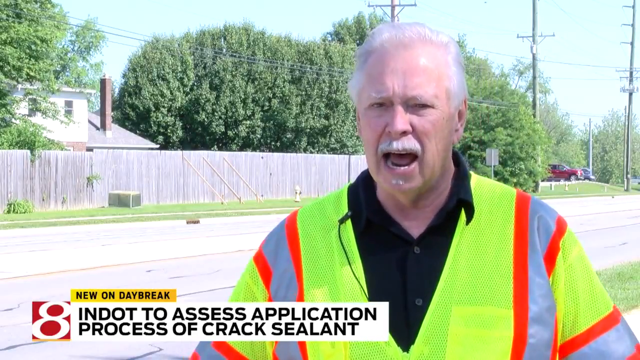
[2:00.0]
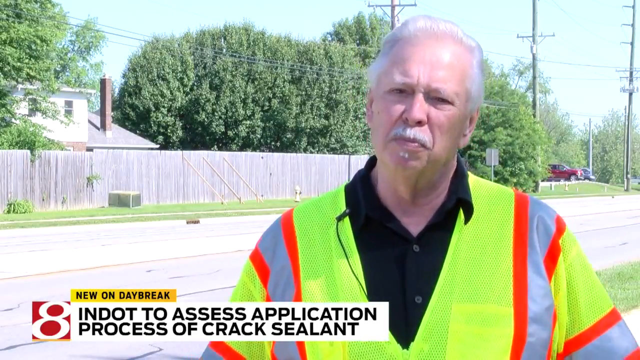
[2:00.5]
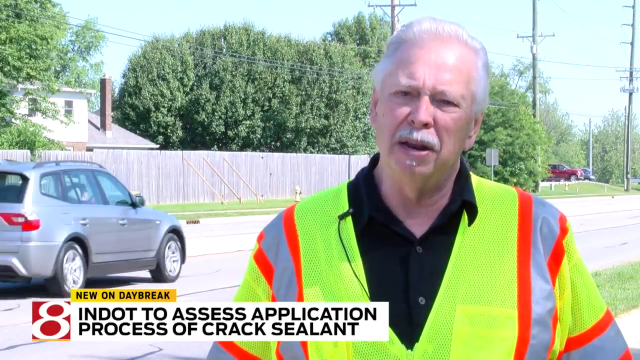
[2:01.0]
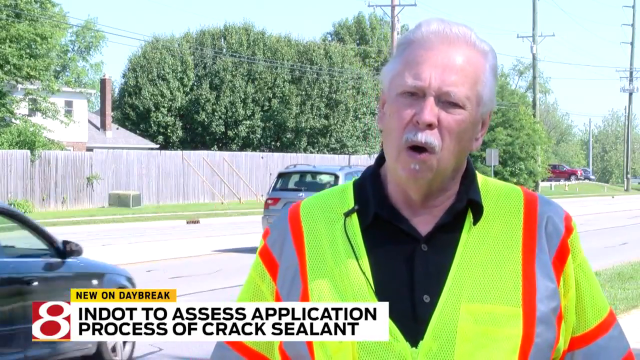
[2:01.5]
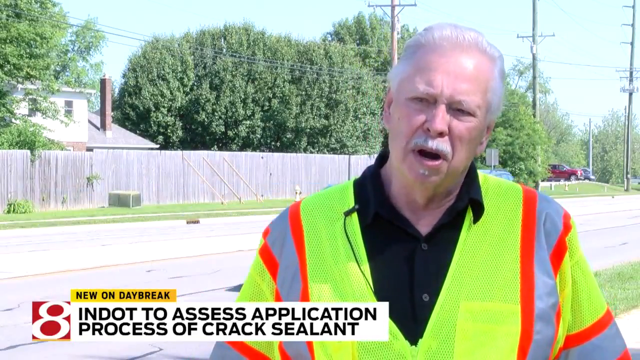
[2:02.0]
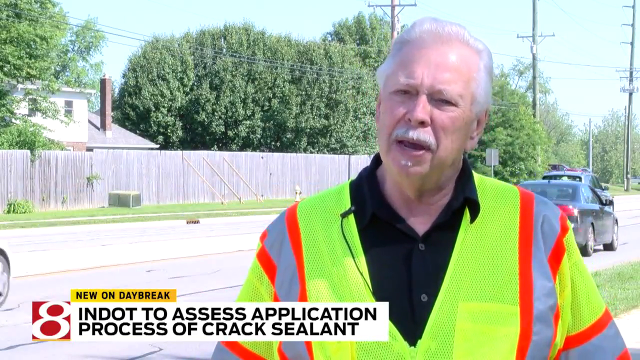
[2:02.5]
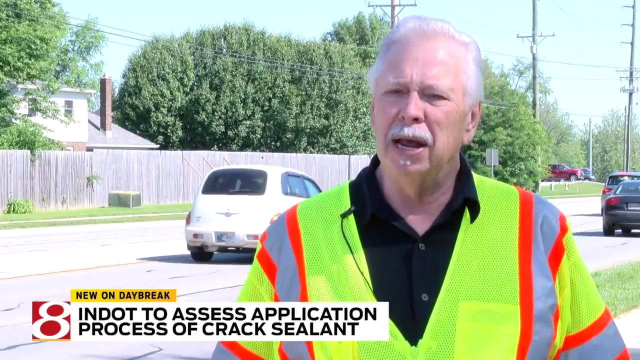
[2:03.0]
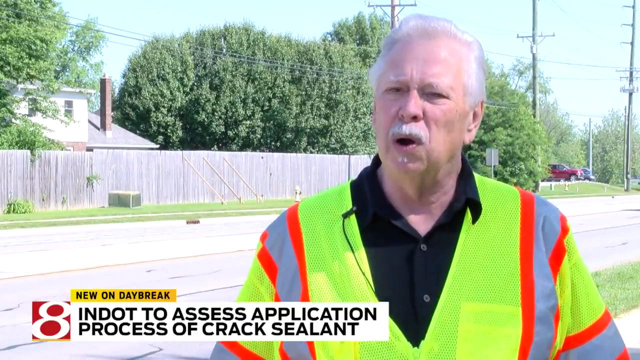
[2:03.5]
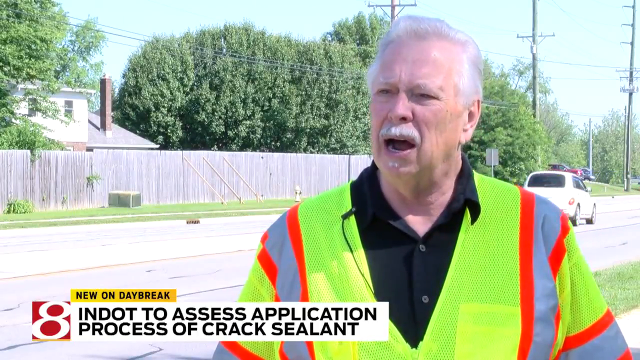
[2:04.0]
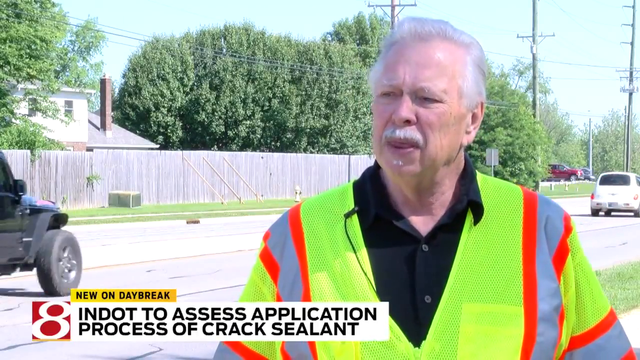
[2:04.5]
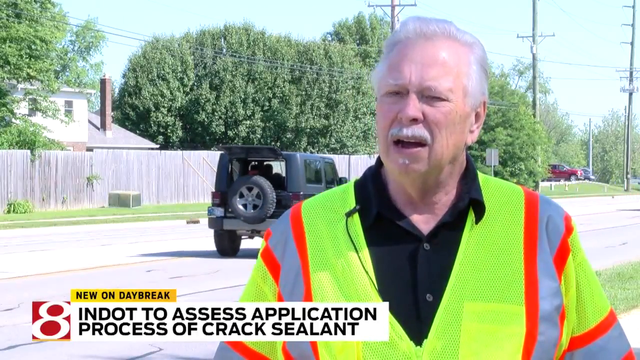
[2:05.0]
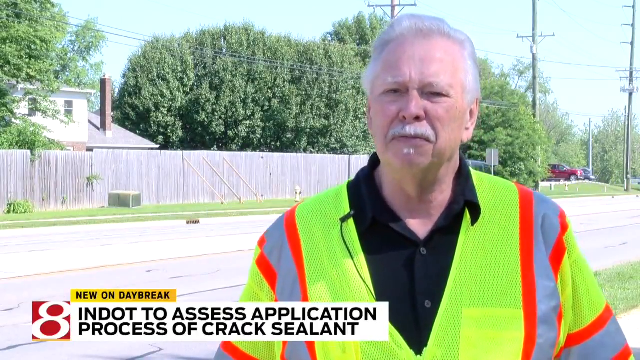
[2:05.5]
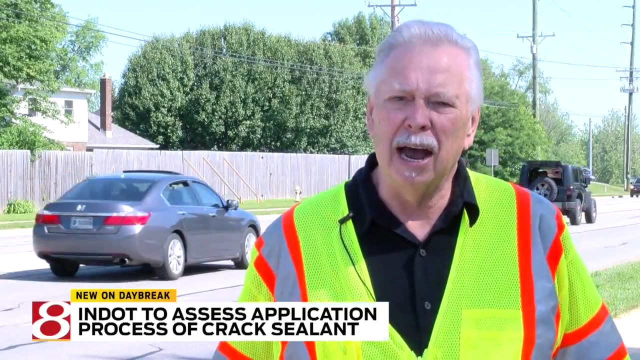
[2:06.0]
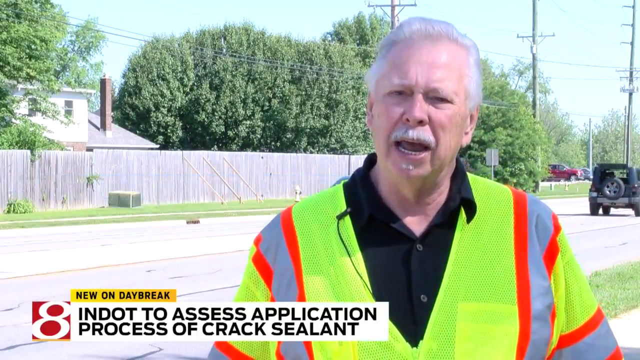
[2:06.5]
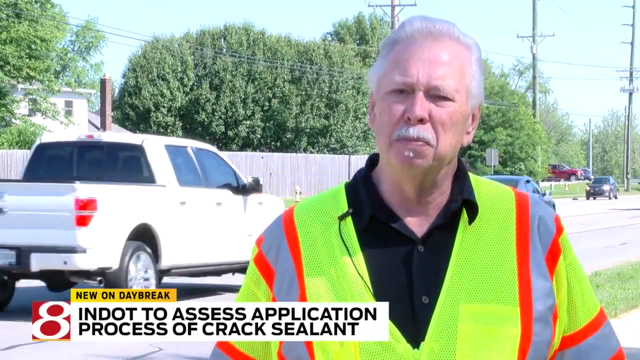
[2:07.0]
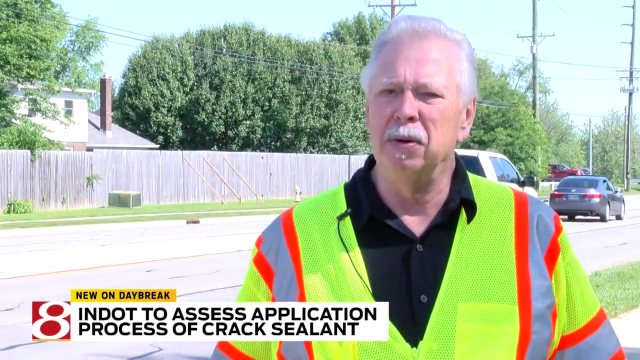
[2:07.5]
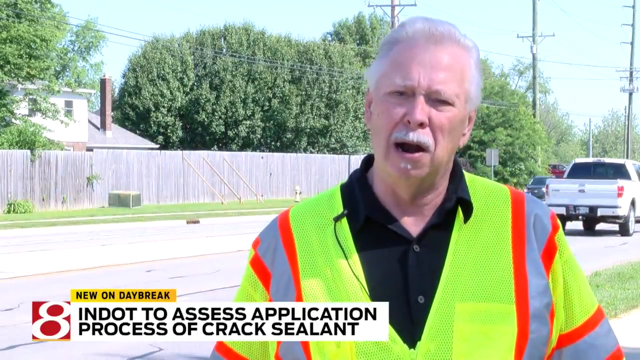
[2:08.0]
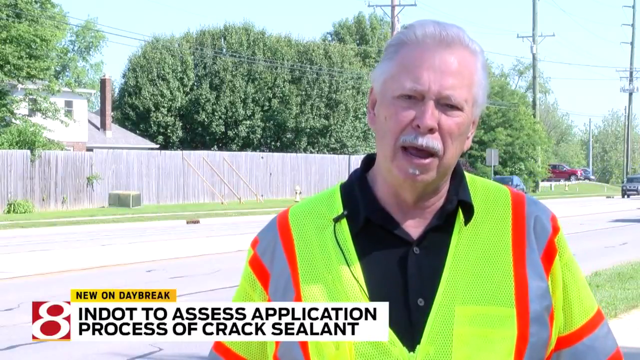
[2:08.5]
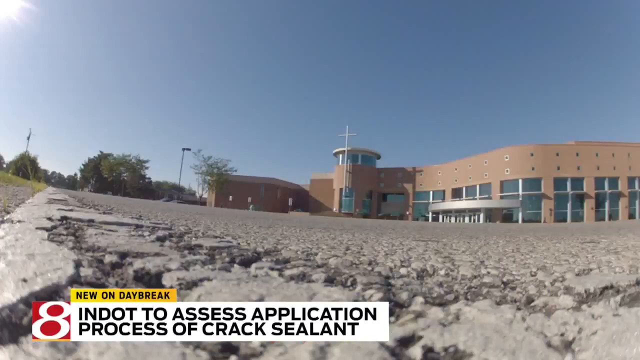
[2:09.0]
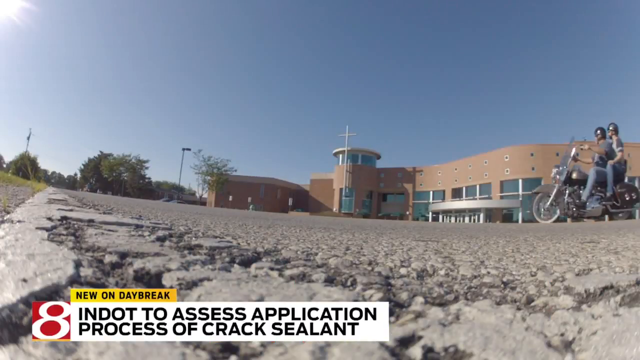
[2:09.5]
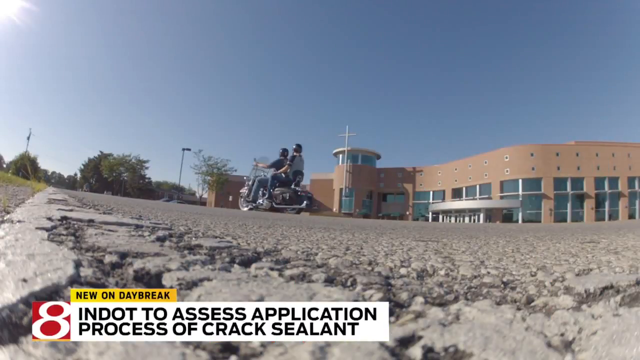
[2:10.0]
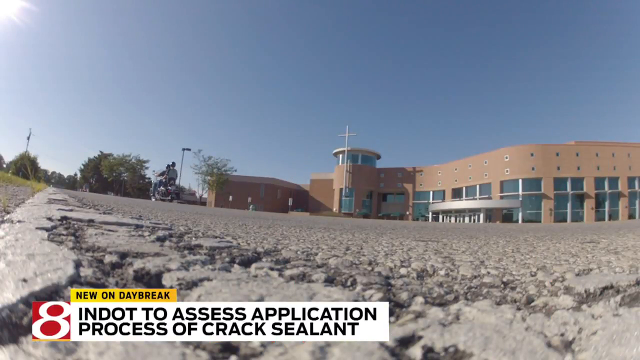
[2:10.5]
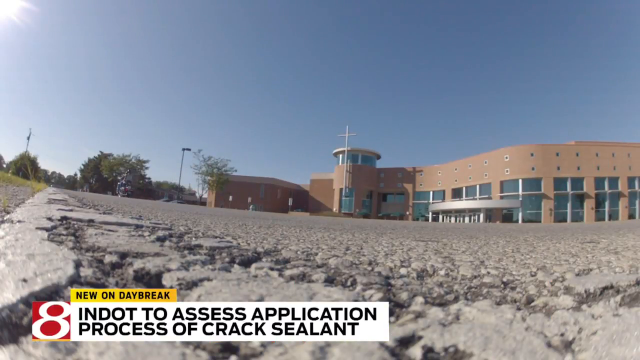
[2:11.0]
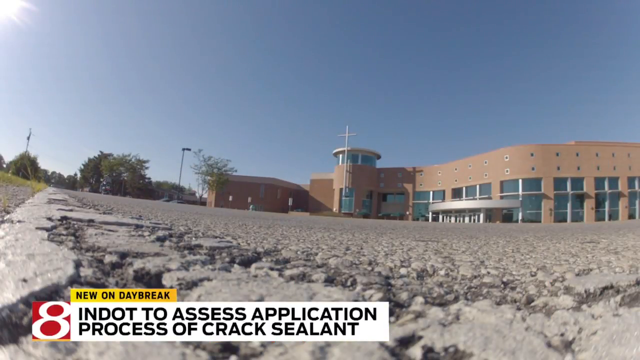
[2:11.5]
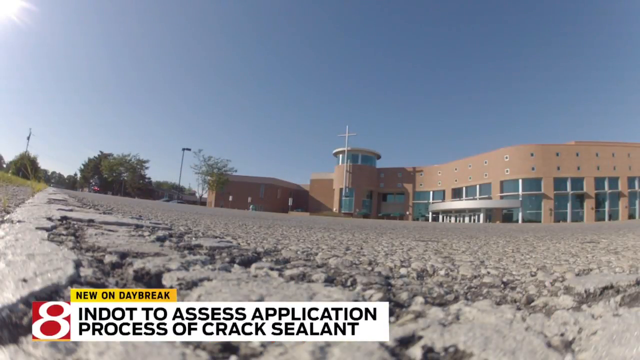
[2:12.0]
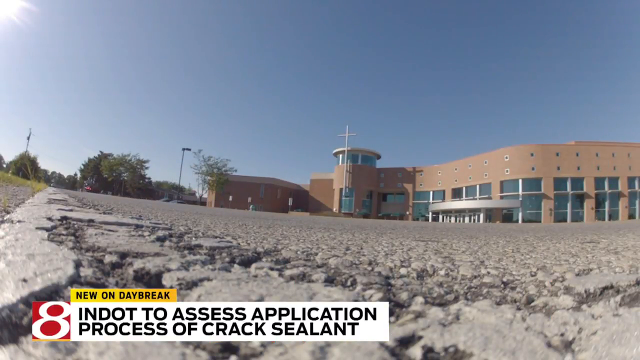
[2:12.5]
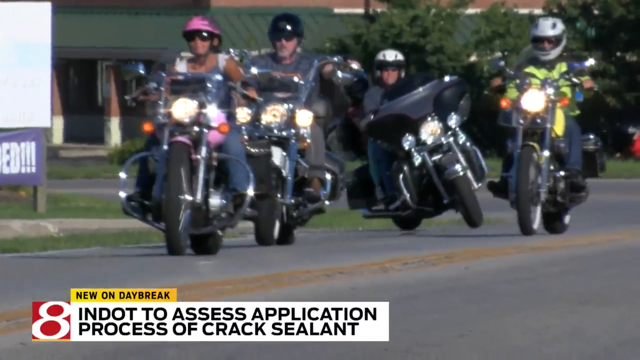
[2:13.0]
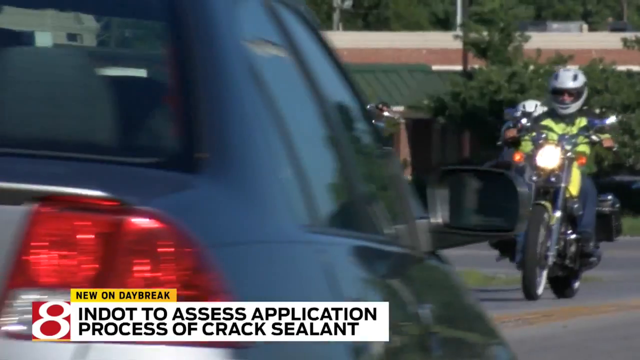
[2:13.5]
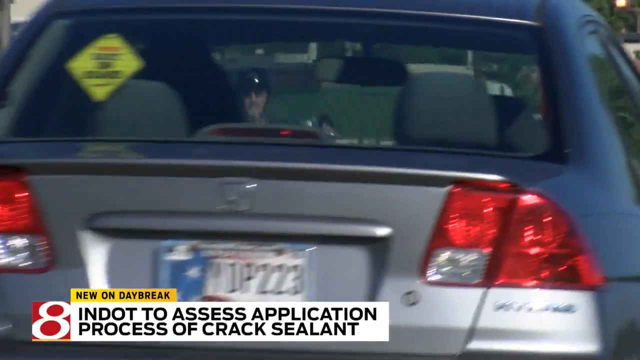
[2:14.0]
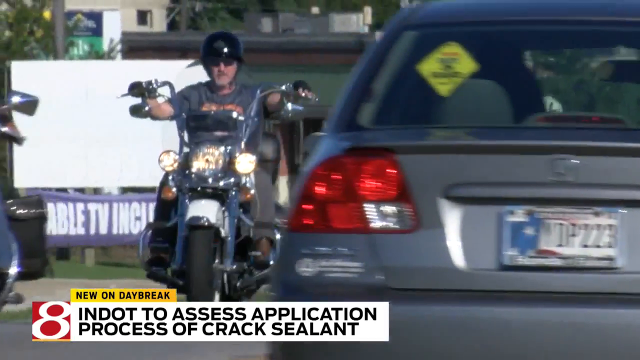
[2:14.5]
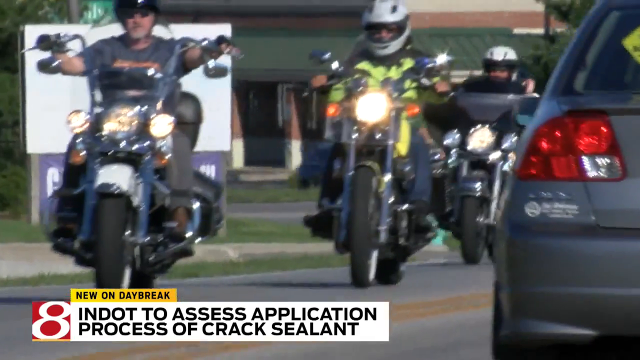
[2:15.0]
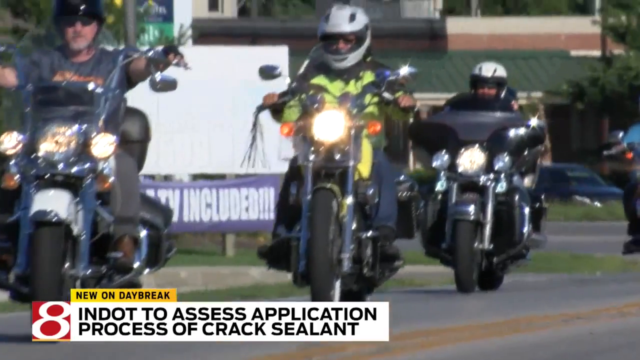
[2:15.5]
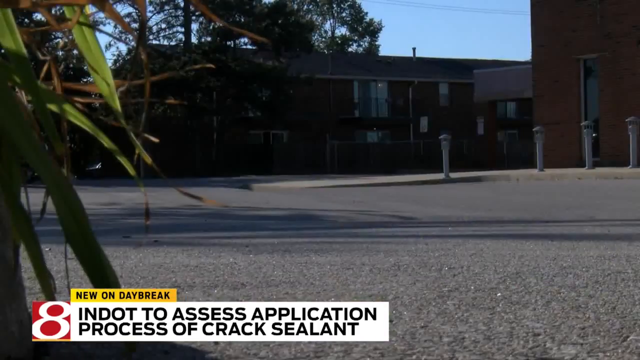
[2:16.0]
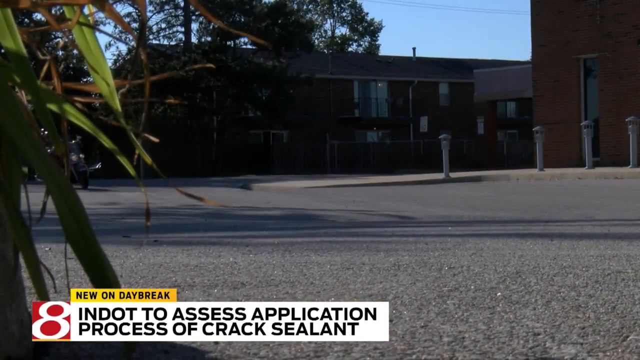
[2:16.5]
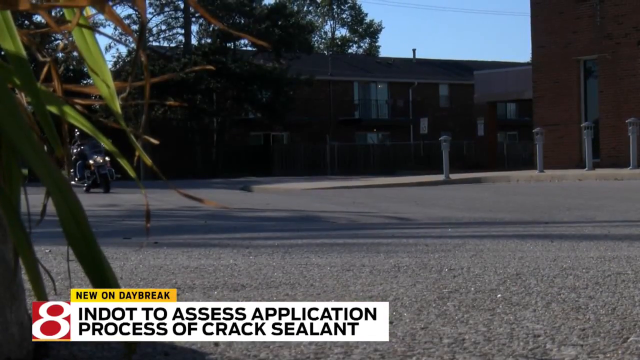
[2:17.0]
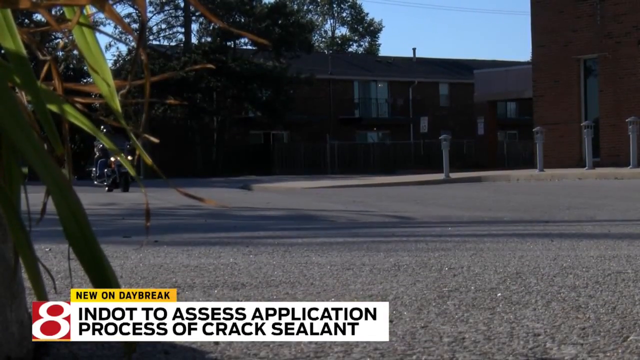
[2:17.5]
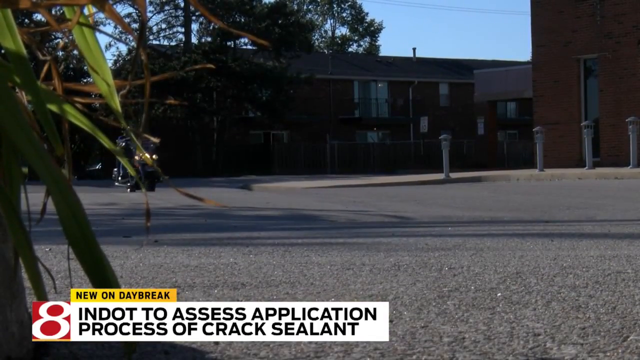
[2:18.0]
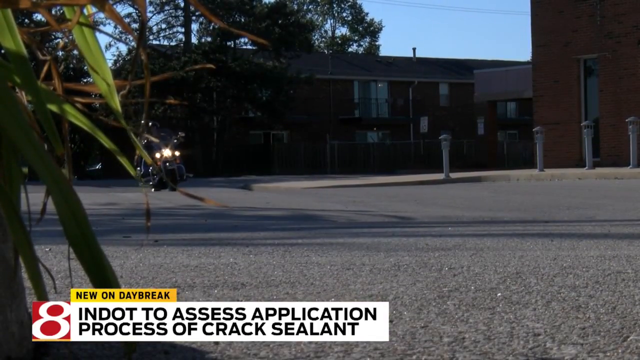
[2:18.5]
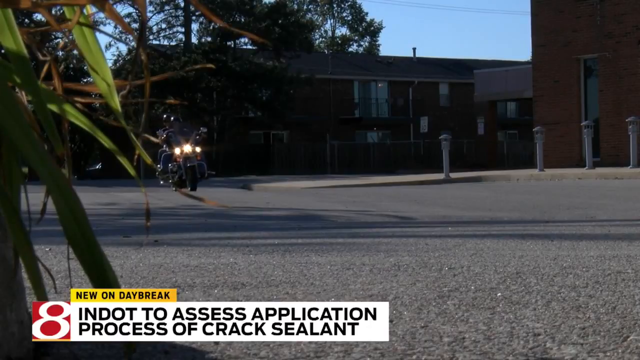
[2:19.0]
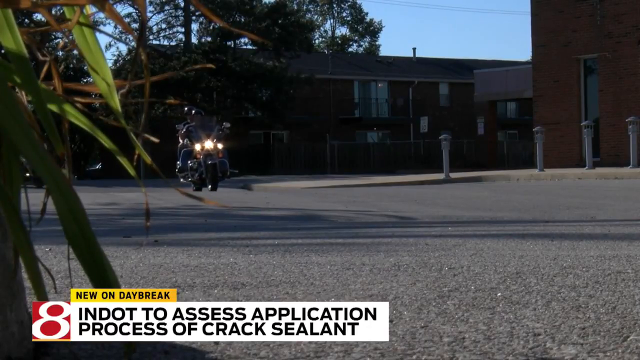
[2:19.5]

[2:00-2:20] In the on-location Channel 8 newscast from Indiana, a man in his mid to late 60s who works for NDOT is interviewed, with the headlines "new on daybreak" and "NDOT to access application process of crack sealant." He has gray hair, wears a yellow, orange and gray protective vest and a black shirt underneath. A close-up shows streets with excess sealant, and a group of motorcycles is shown, apparently because the excess sealant affects their ability to navigate the streets.